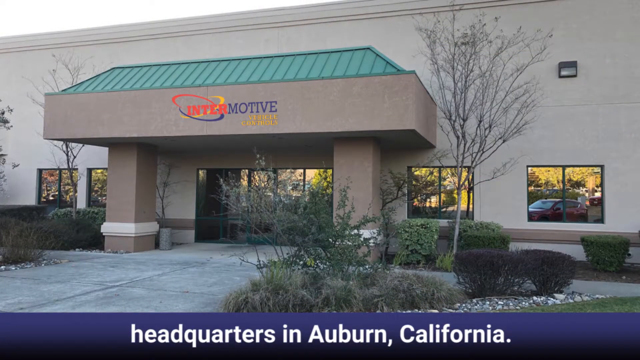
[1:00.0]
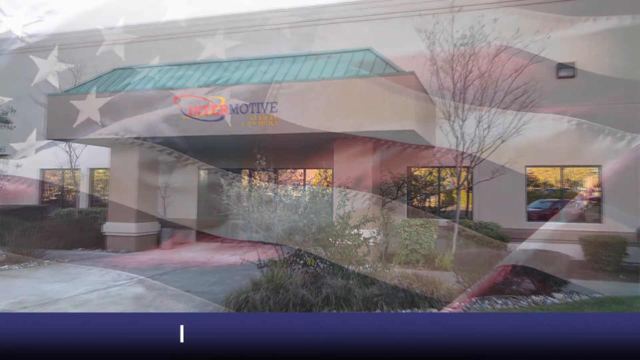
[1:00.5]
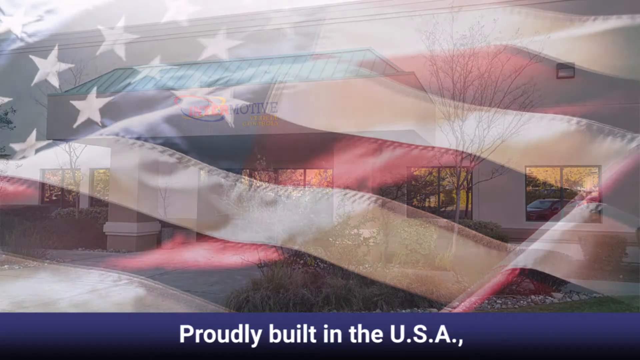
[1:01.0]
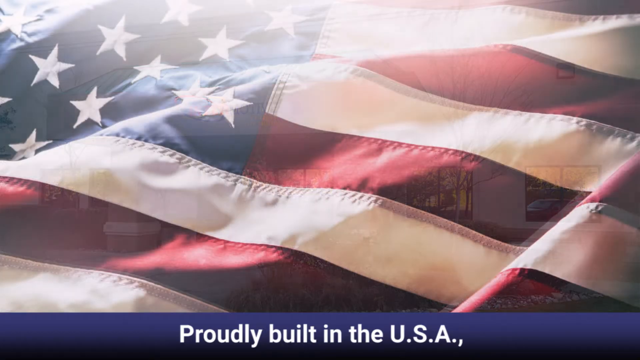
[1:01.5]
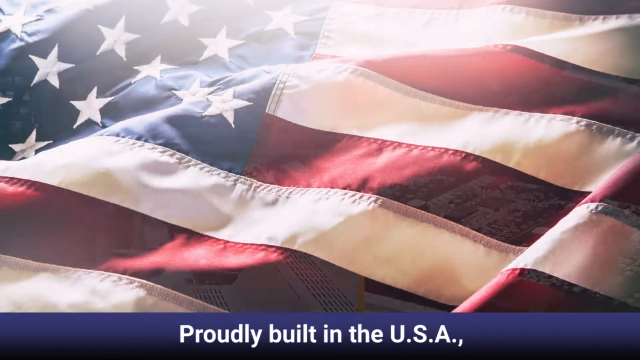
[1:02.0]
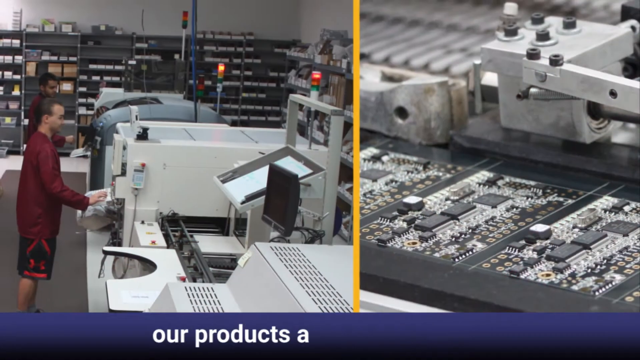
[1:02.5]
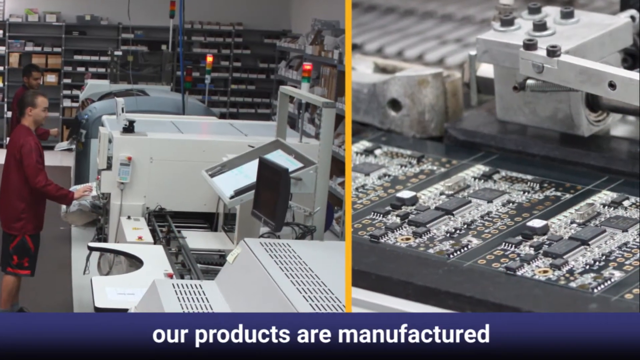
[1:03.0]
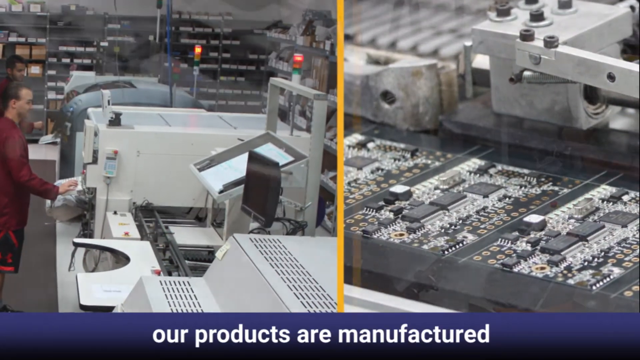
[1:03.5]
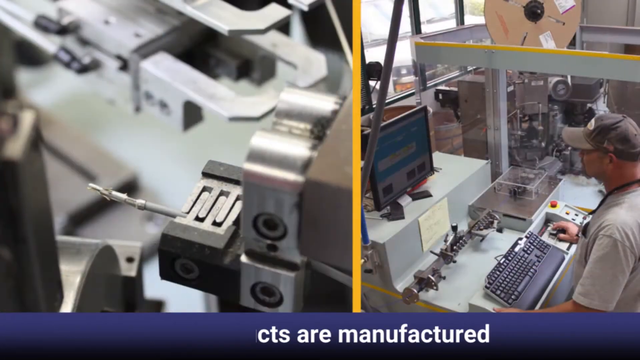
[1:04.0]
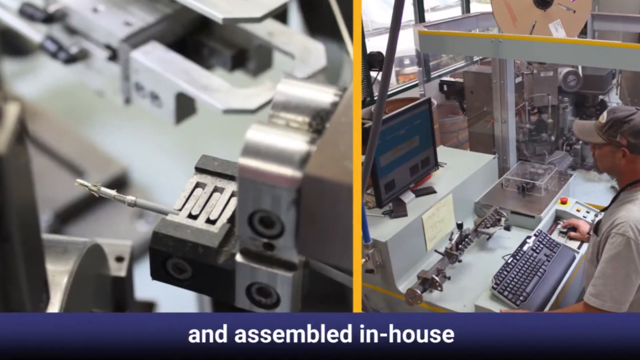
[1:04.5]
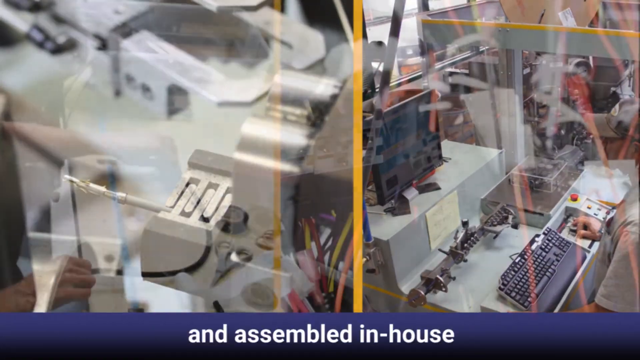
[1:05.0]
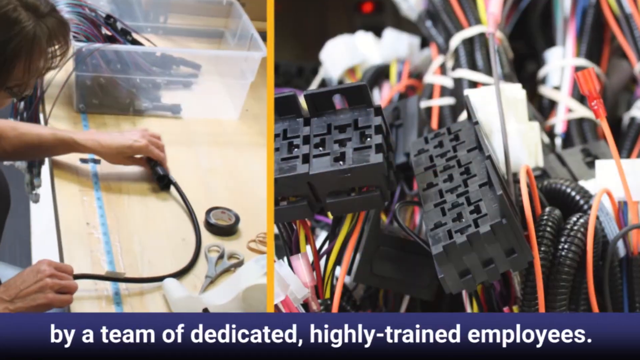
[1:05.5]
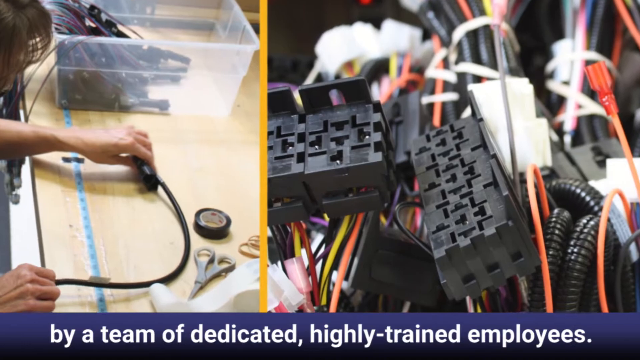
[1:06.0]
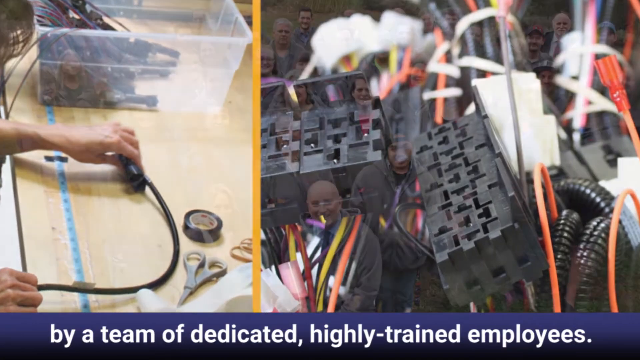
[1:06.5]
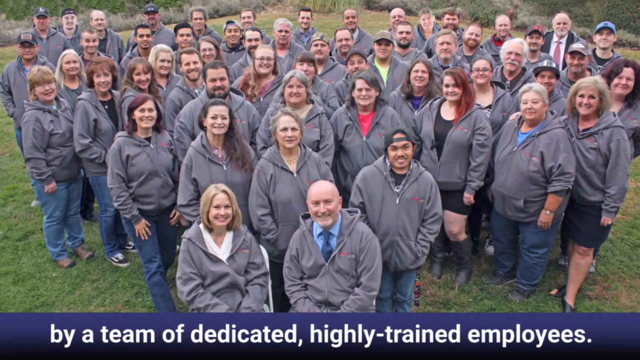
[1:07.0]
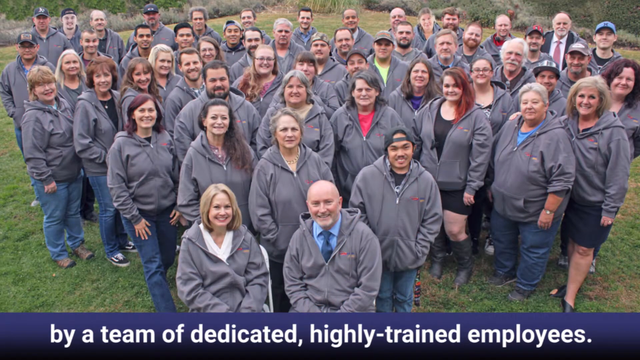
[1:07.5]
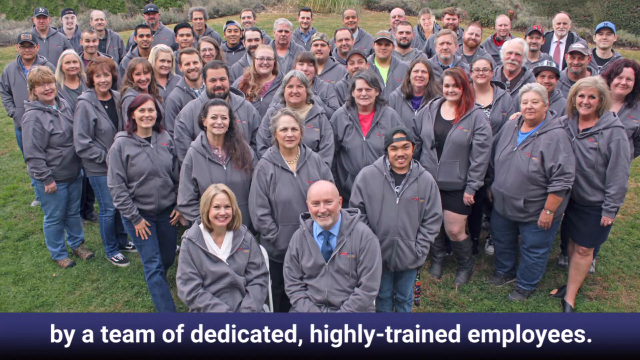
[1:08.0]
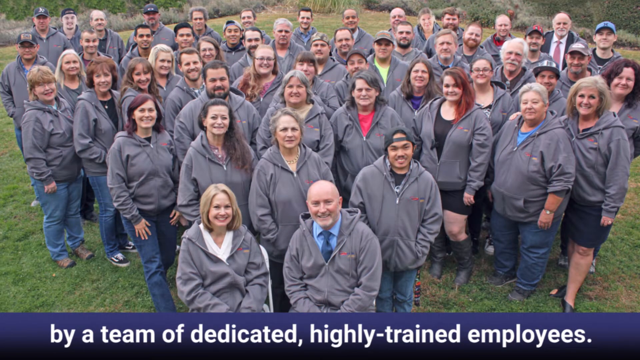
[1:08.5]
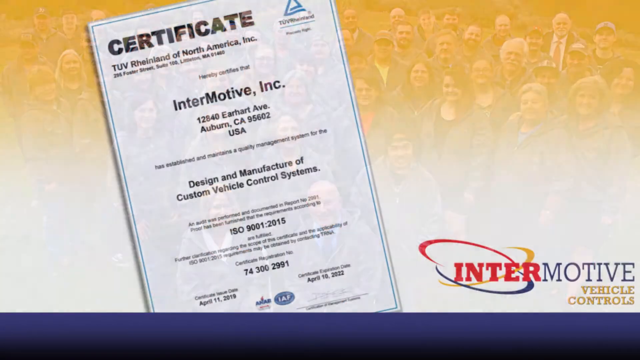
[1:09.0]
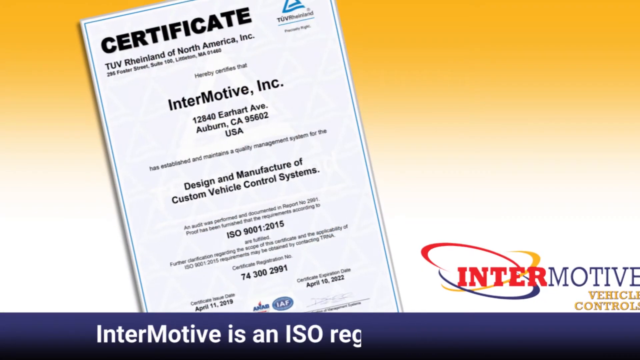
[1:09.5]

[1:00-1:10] A close-up shows the American flag: the blue part with stars is on the left, reaching a little short of the halfway point and angling up, with only about 11 stars visible. To the right of it and below it are red and white stripes, four red and four white. A light shines down on it. Next, inside a factory, there are images on the left and right. On the left, a couple of people work facing right in front of a big machine; on the right, the view focuses in on tiny microchips. More shots inside the factory follow: on the left, a woman works on big electrical cords, or has some tape and scissors in front of her; on the right are little plastic pieces with spots to stick prongs into to connect medical devices. The video cuts to a whole group of people, all wearing gray hoodies, probably 35 to 40 of them, standing outside on grass with a bit of a tree line across the top. Information still runs across the bottom. Then the video cuts to a yellow background with a certificate page taking up most of the left side.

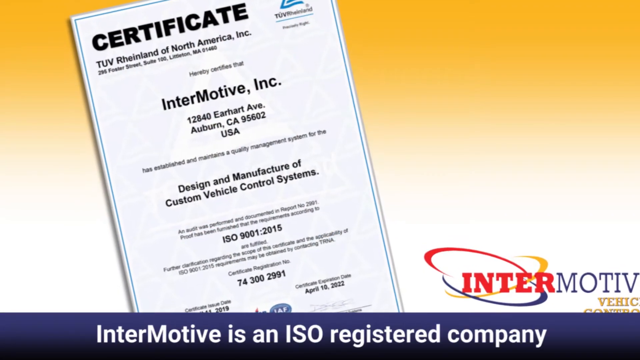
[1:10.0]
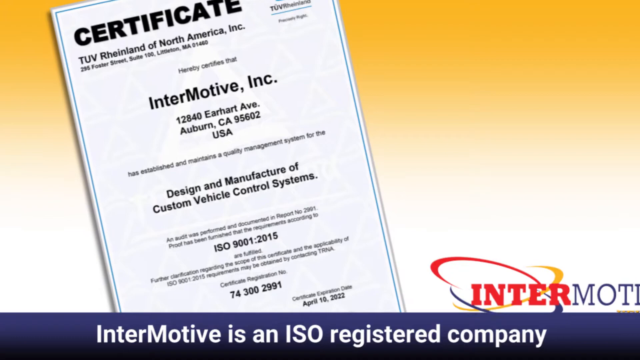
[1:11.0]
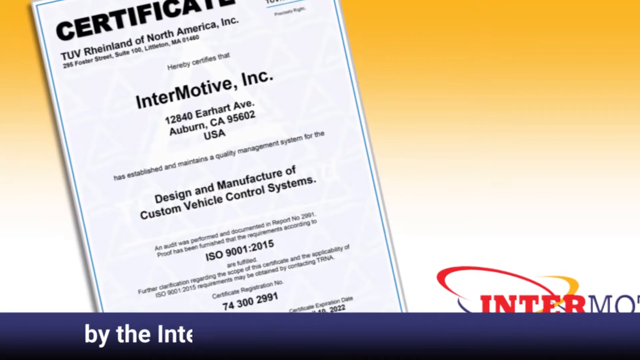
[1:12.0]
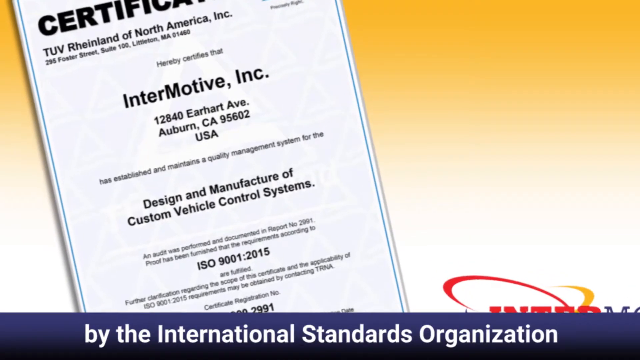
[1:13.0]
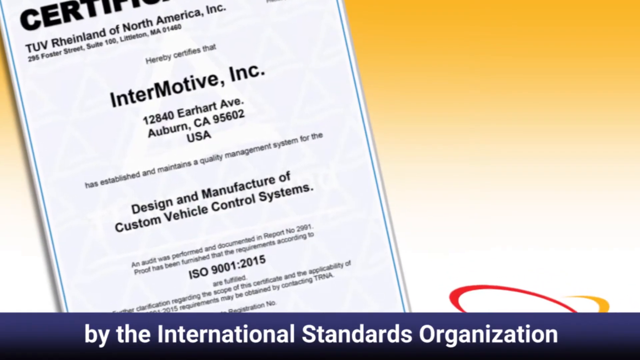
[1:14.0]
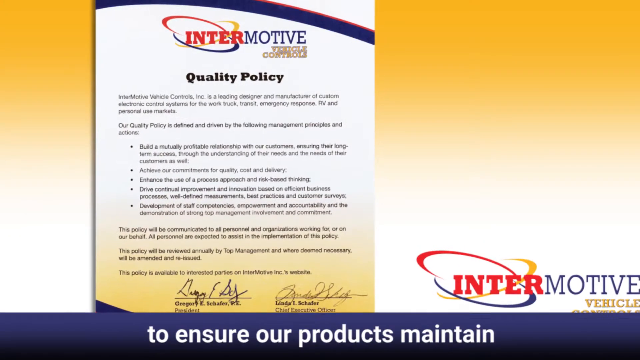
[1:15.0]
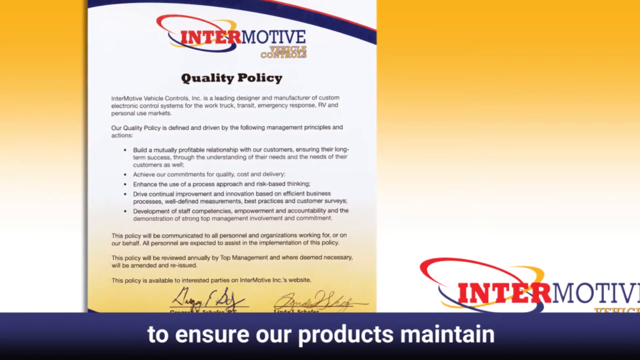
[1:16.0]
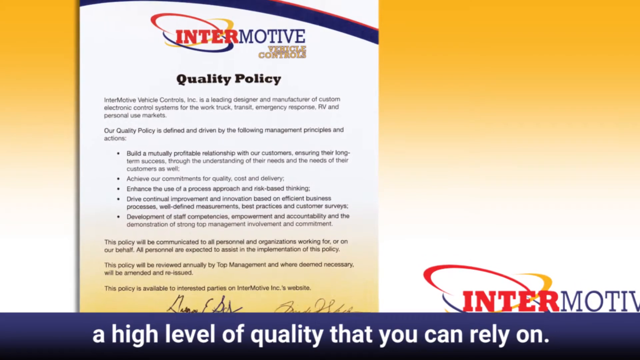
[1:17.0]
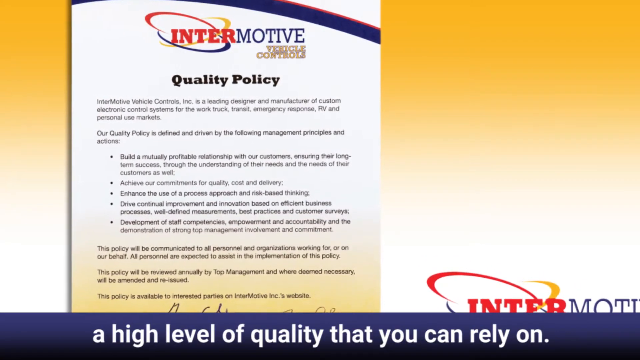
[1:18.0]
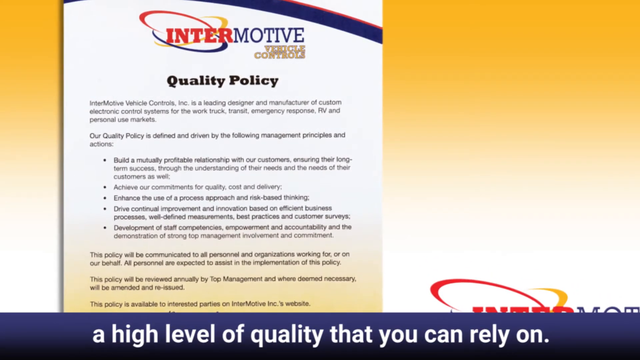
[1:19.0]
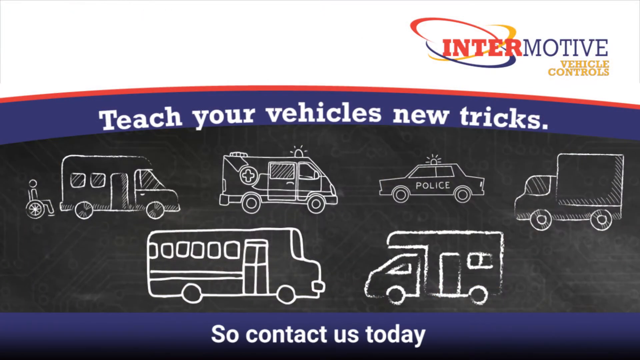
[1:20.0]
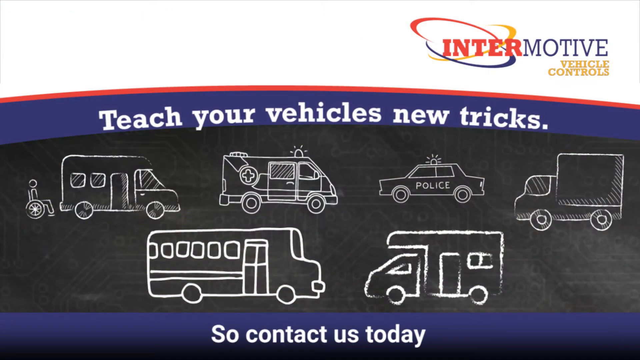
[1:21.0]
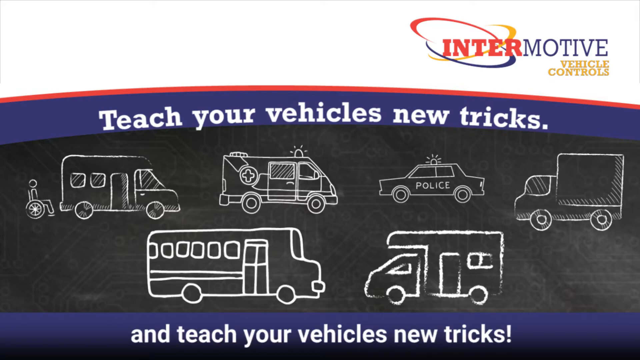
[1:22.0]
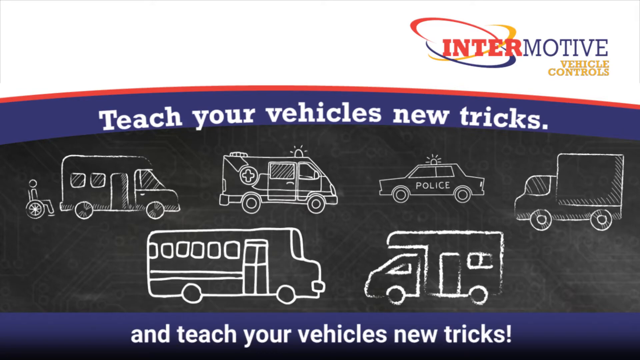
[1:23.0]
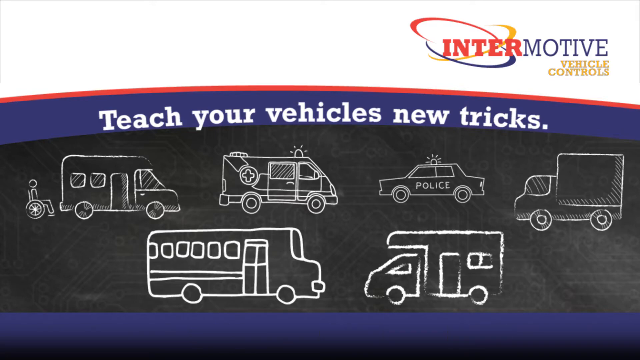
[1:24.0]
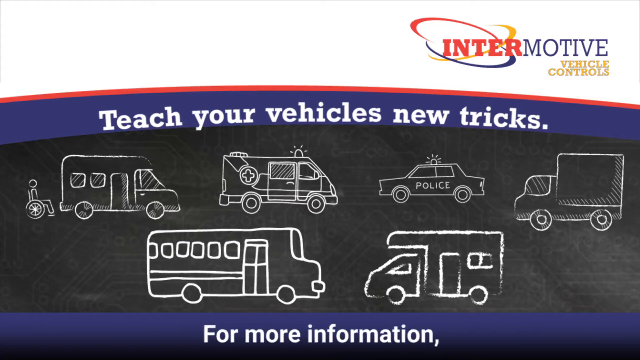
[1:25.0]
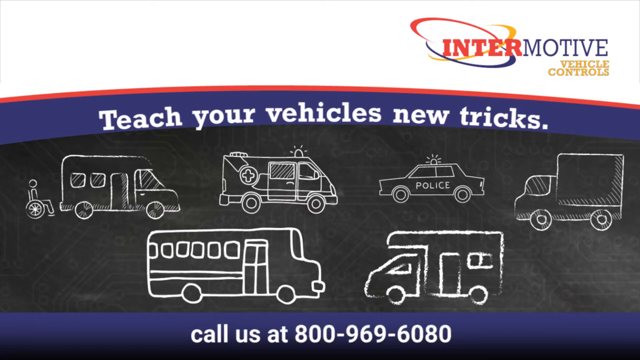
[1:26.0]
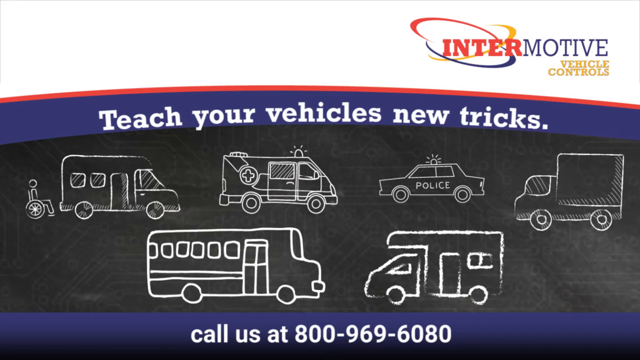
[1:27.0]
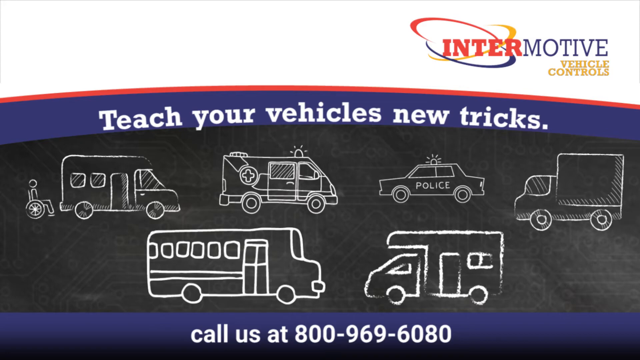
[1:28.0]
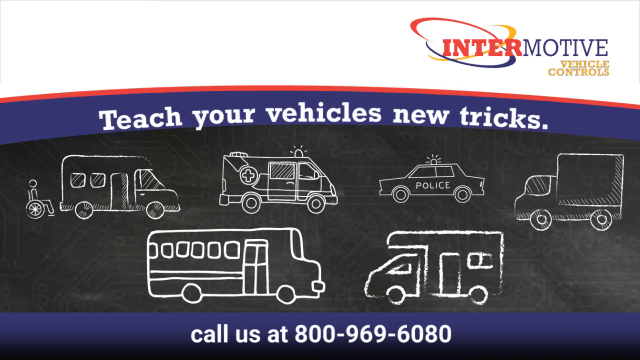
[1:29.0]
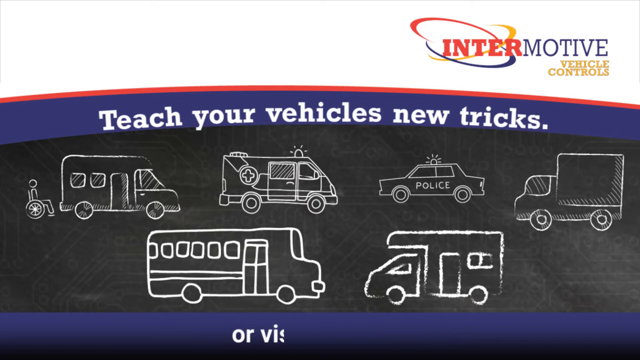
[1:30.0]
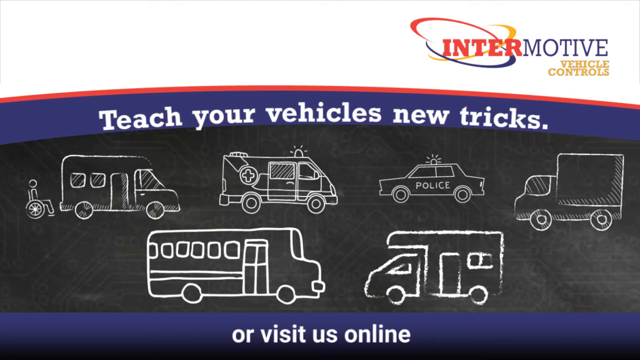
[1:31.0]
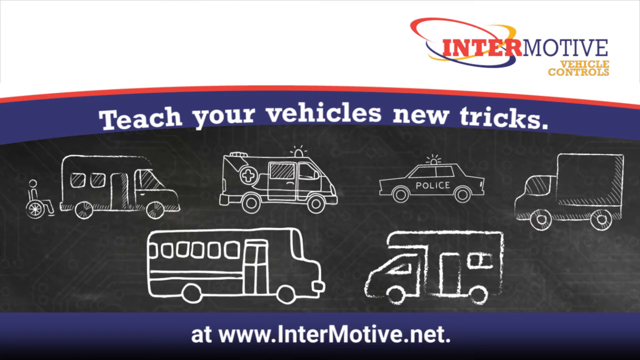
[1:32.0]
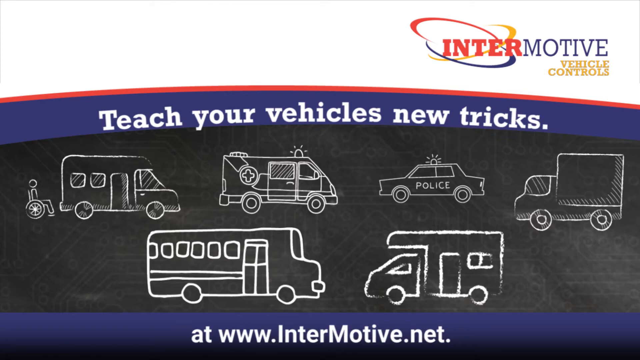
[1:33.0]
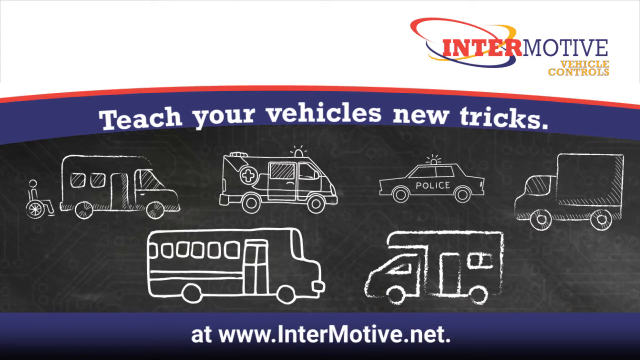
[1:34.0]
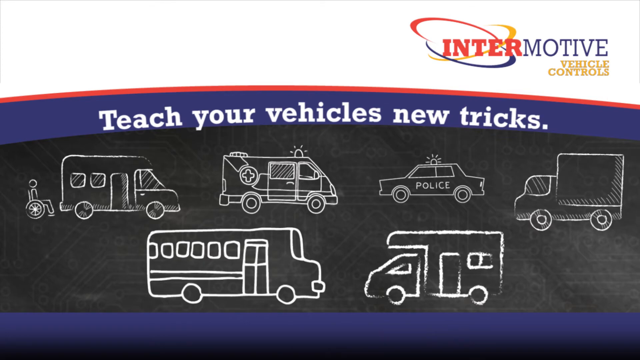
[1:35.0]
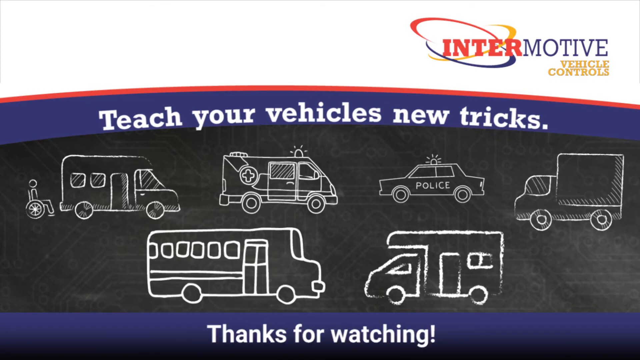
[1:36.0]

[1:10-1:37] The view slowly pans in a little on the page, with white text still scrolling across the bottom. It switches to the Intermotive quality policy, which looks like the front of a pamphlet or book, with text all across it and two signatures at the bottom, as the view slowly pans in. The video cuts back to the opening layout, with white at the top, Intermotive on the right, and the little chalkboard with vehicles drawn on it below, while white text still scrolls across the bottom. A phone number to call for more information is given, and text reads "visit us online." The top background is white with "Intermotive vehicle controls" on the right side, then a thin red border, a blue border, and bold white lettering reading "teach your vehicles new tricks." Below are two rows of vehicles. In the top row, a wheelchair is on the left side with a little bus right in front of it, and an ambulance, both facing right; facing left are a police car and a small box truck. In the bottom row, a big bus faces right, and on the right side is a little box truck with a lip that goes over the top of the truck cab.